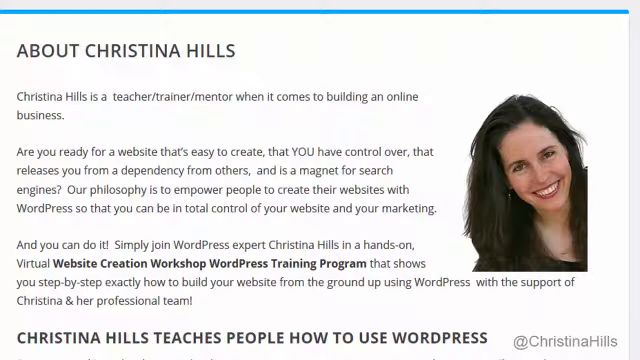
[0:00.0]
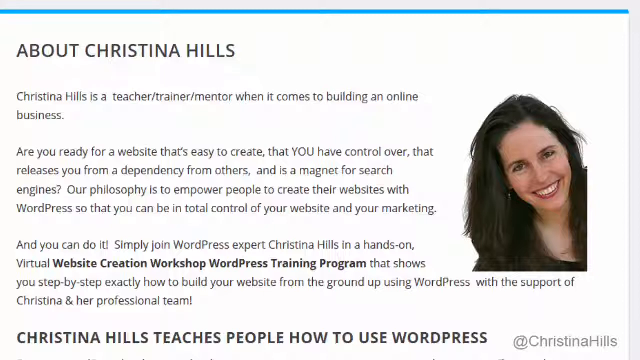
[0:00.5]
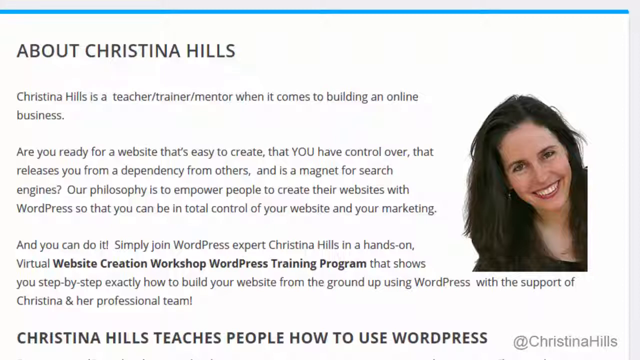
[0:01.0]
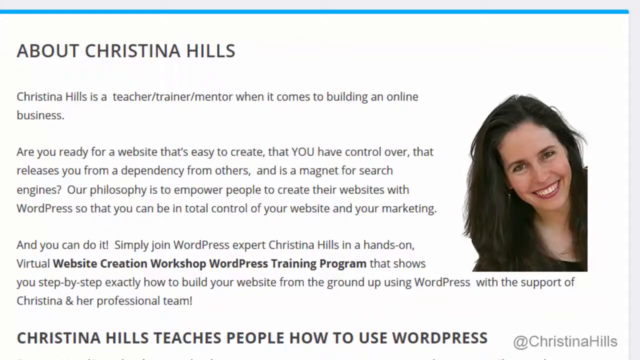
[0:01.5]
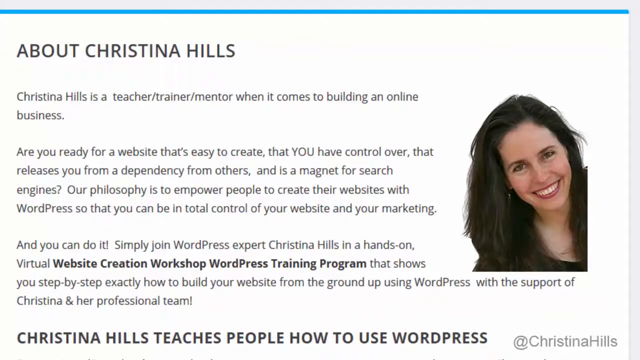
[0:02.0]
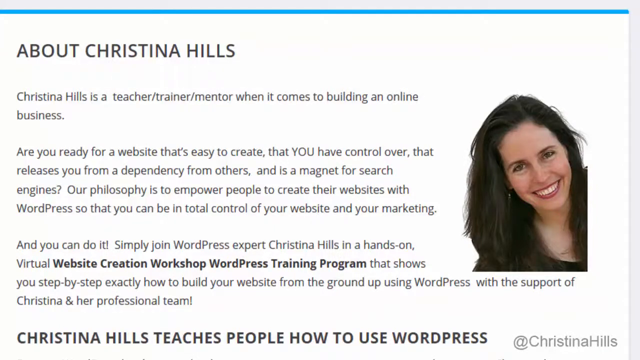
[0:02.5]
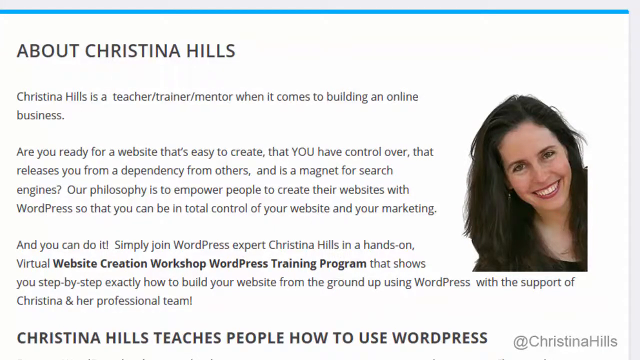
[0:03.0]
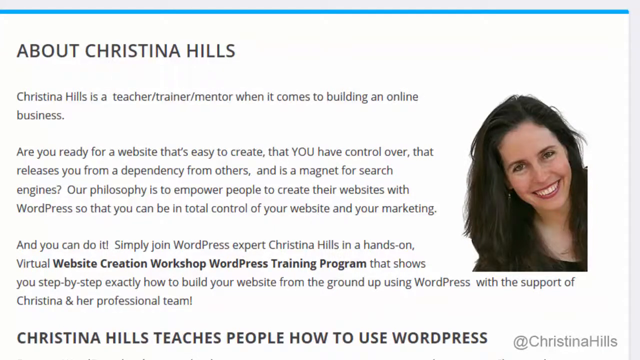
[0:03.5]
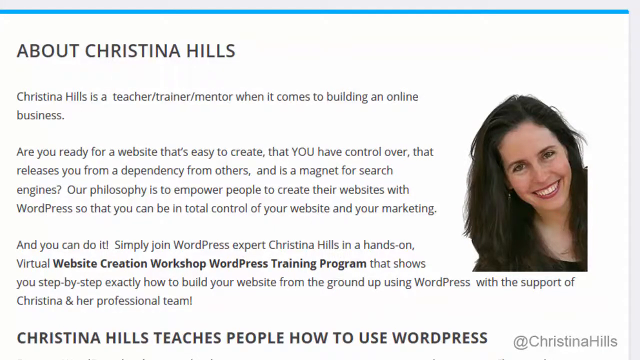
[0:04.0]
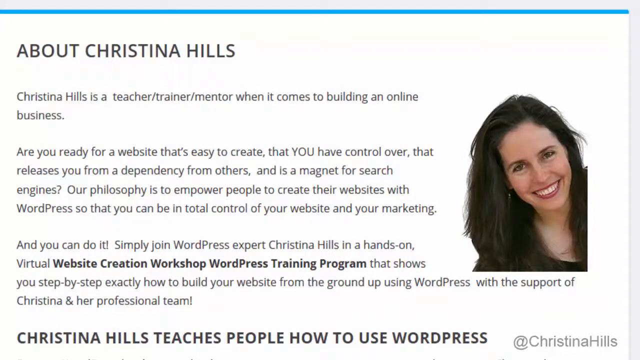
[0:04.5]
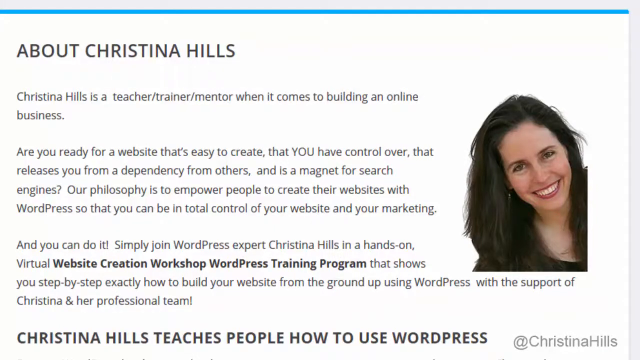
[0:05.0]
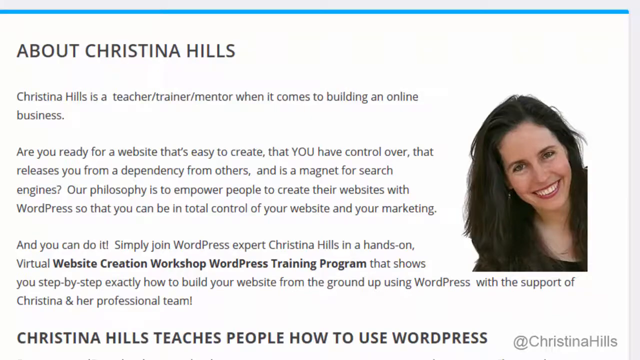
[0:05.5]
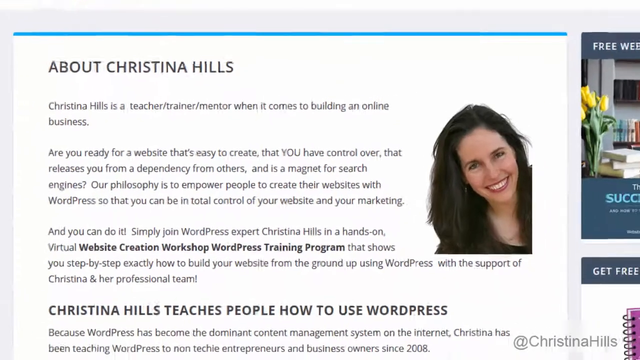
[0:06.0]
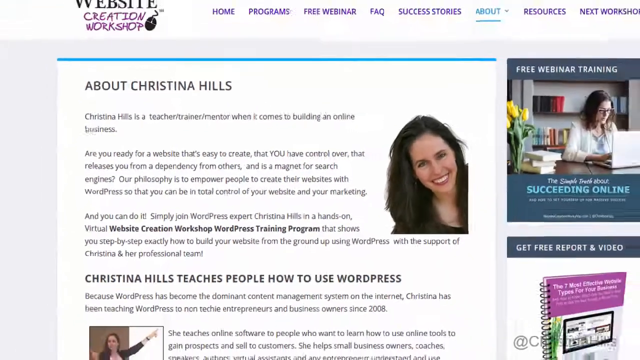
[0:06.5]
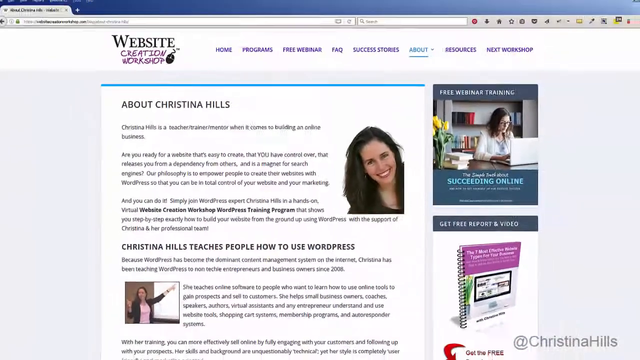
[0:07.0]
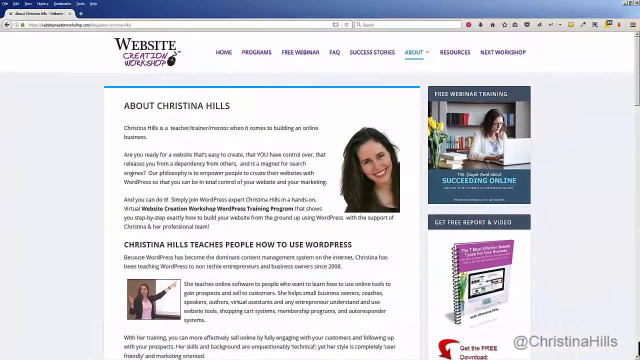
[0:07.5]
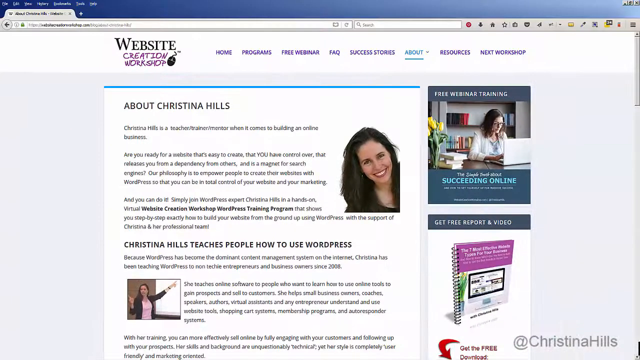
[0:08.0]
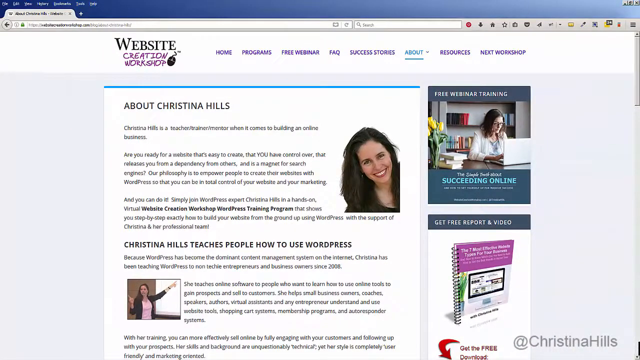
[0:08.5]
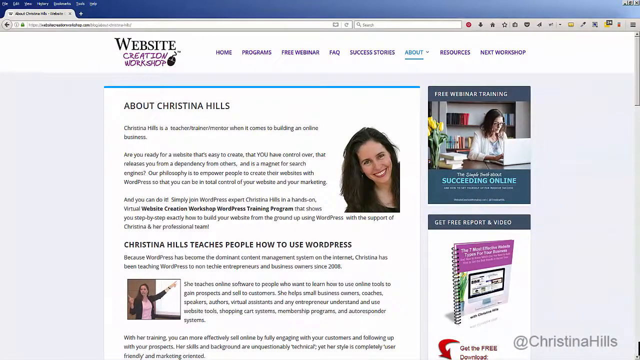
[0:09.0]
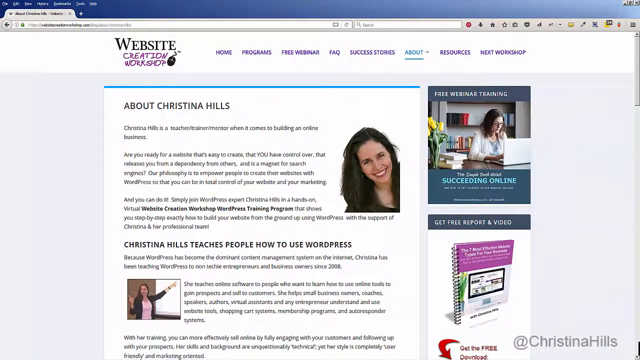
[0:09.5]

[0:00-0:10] A web page from a website creation workshop training program is shown, beginning with a close-up of the page's creator. The header reads "About Christina Hills" and the text reads, "Christina Hills is a teacher, trainer, mentor when it comes to building an online business. Are you ready for a website that's easy to create, that you have control over, that releases you from a dependency from others and is a magnet for search engines? Our philosophy is to empower people to create their websites with WordPress so that you can be in total control of your website and your marketing. And you can do it! Simply join WordPress expert Christina Hill in a hands-on virtual website creation workshop WordPress training program that shows you step-by-step exactly how to build your website from the ground up using WordPress with the support of Christina and her professional team." Next to the text is a photograph of a woman with long dark brown hair smiling at the camera. The camera pans out to show more of the web page.